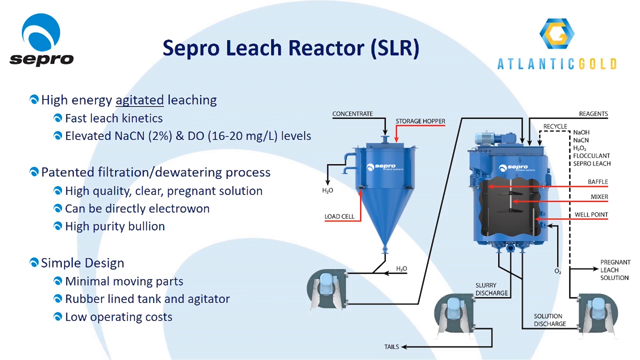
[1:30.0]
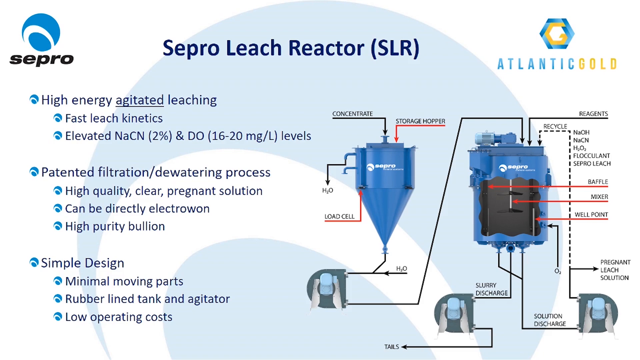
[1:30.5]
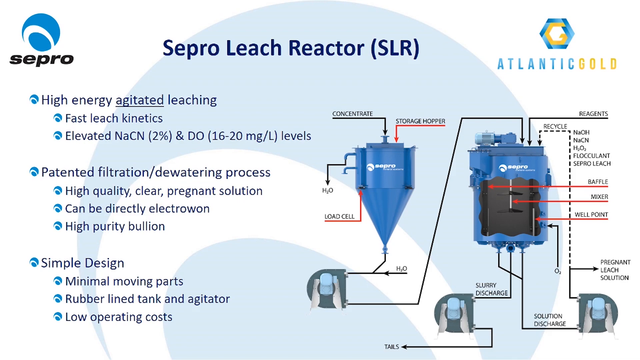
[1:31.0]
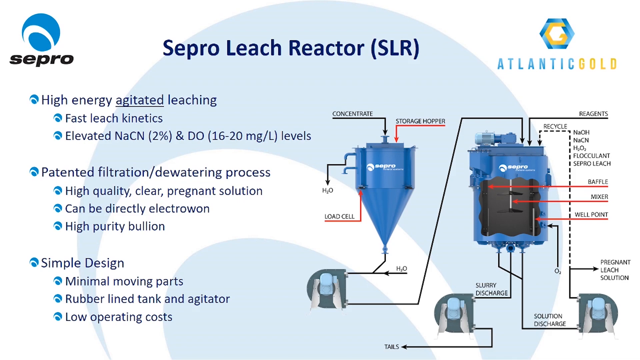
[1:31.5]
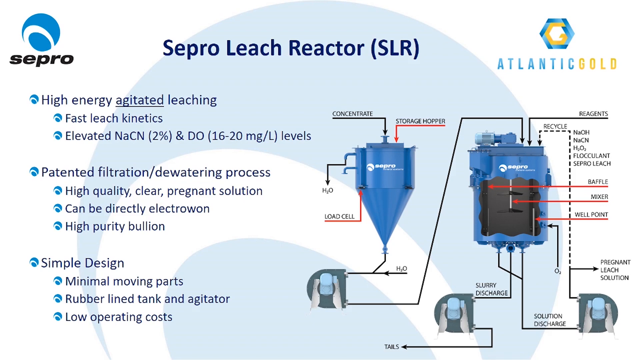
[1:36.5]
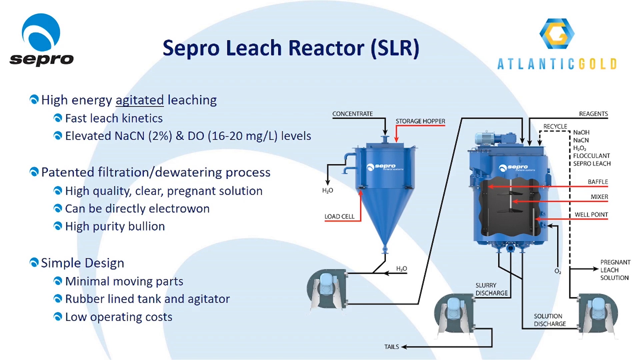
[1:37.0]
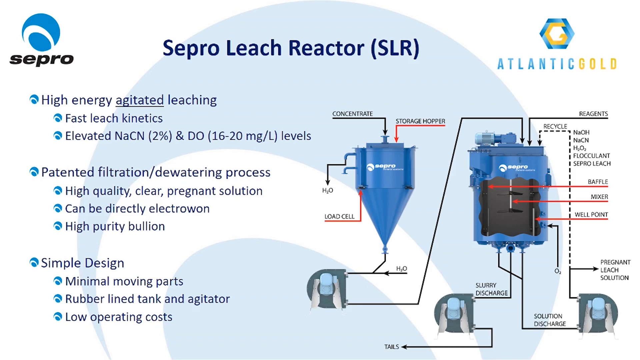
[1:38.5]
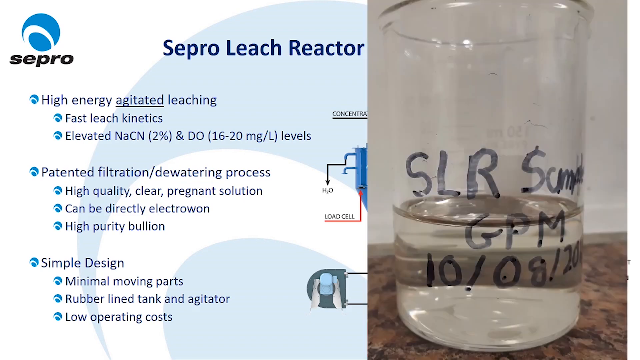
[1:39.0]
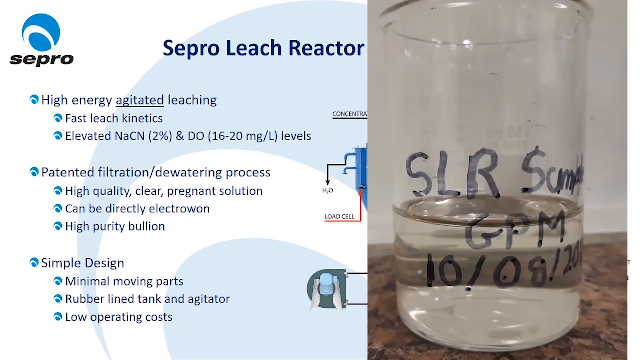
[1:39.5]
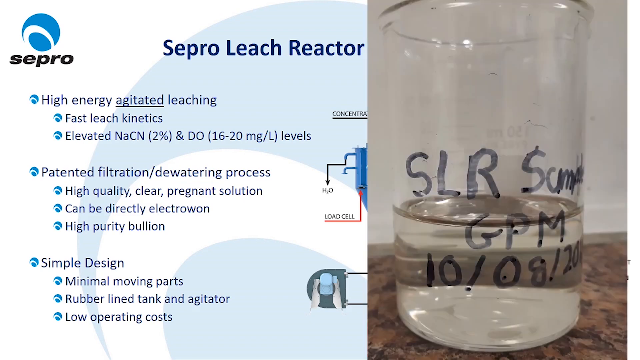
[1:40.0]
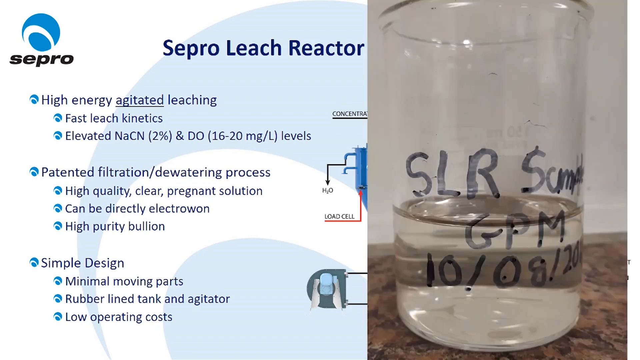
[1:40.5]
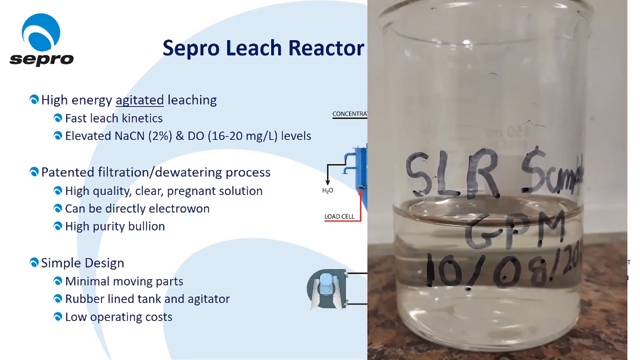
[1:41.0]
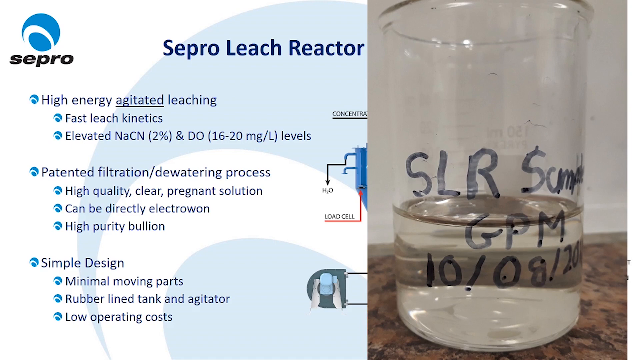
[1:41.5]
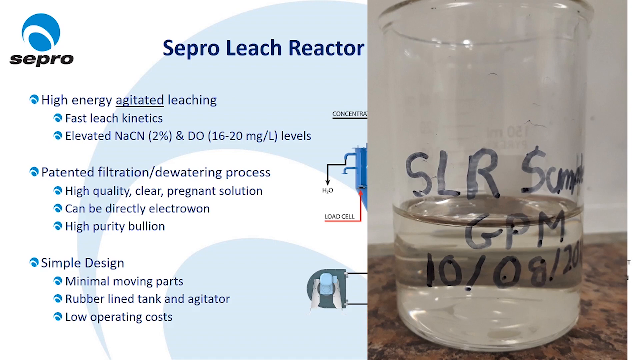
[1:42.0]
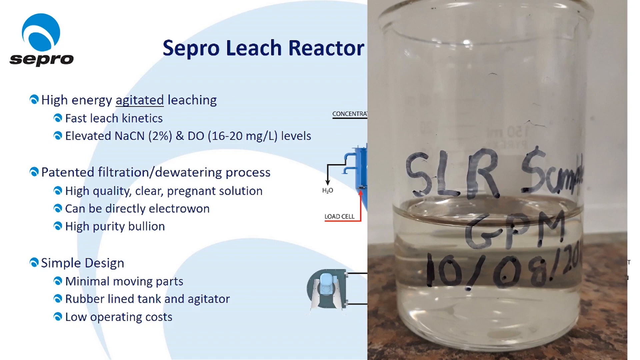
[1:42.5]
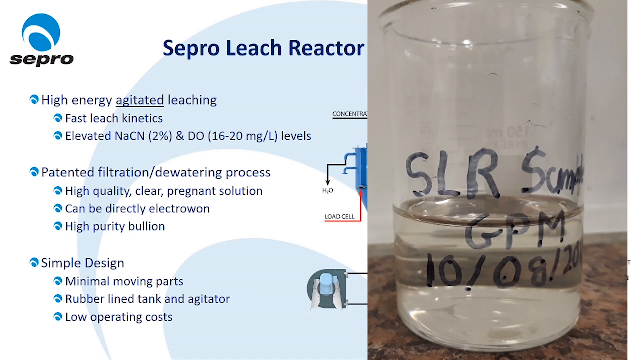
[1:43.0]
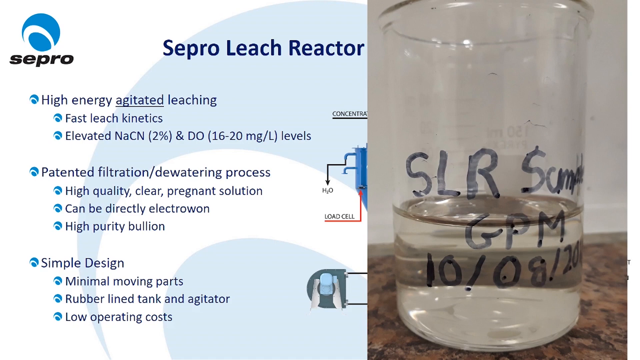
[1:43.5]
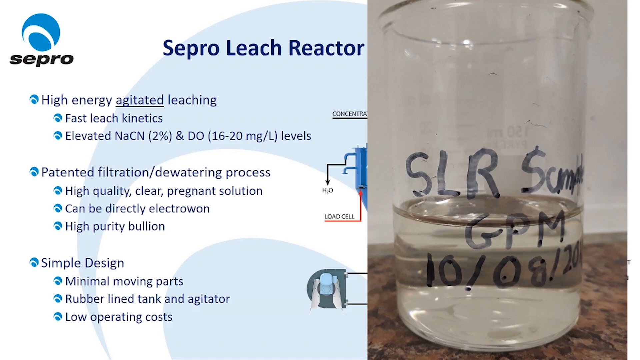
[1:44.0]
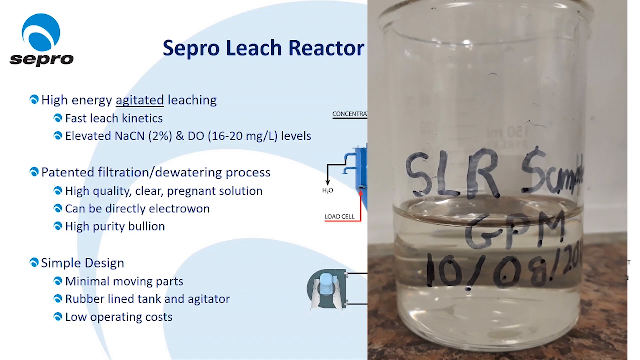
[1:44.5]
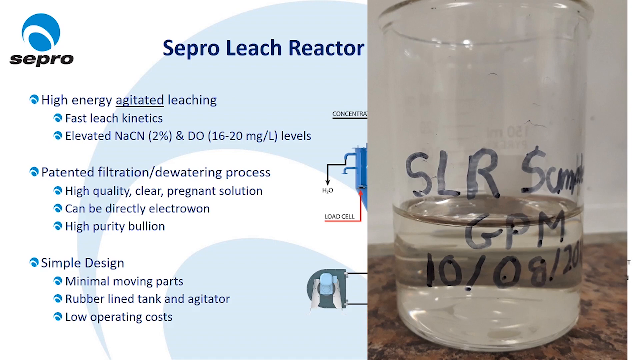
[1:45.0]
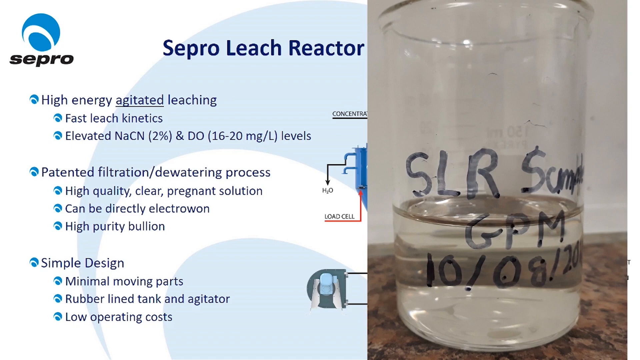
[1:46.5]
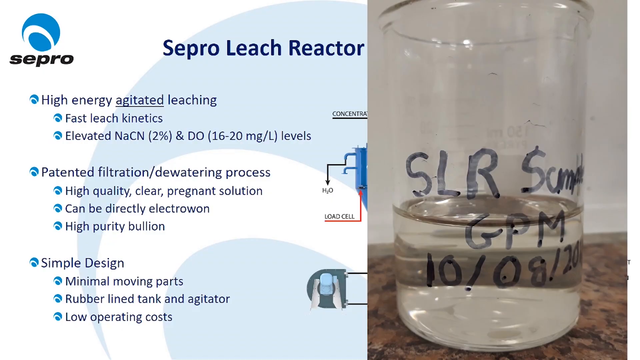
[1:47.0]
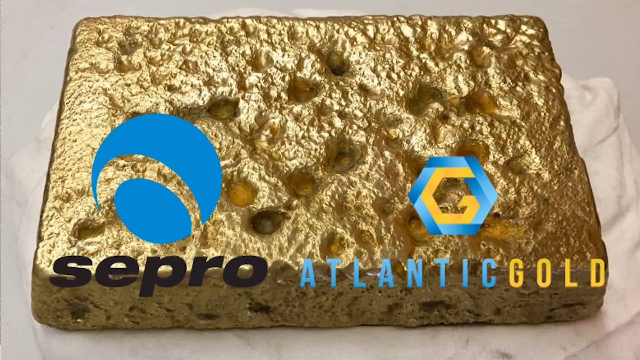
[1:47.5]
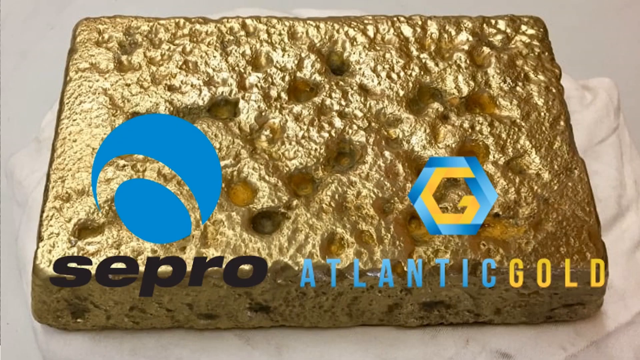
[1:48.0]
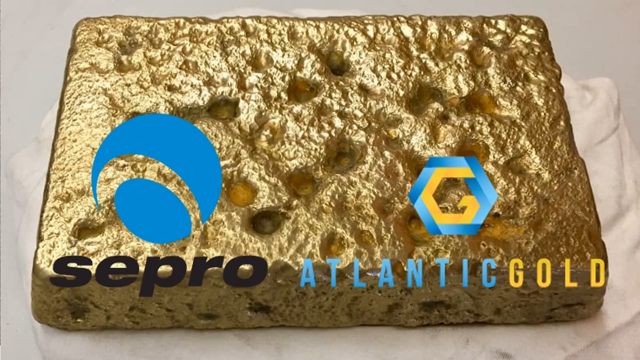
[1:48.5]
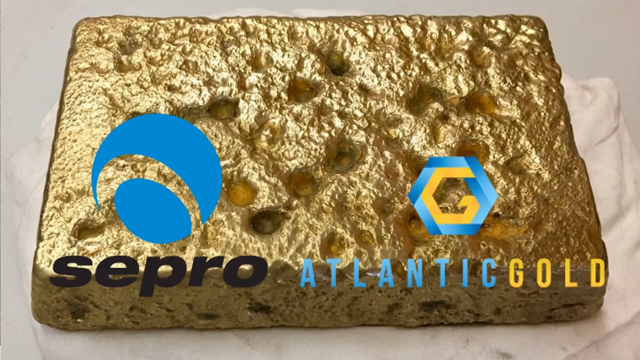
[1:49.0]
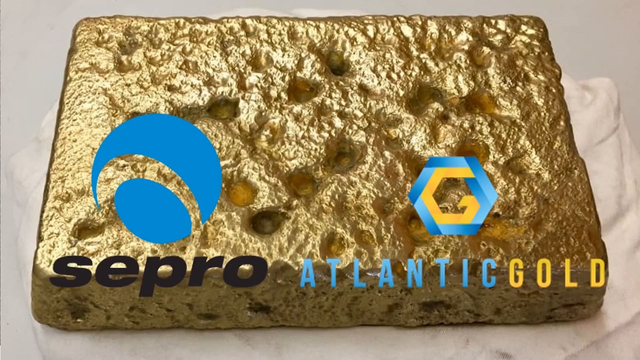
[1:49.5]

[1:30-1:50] An infographic of the Sepro leach reactor shows bulleted items describing what it does: "high-energy agitated leaching, fast leach kinetics elevated in NaCN 2 percent and DO 16-20 mg-L levels. Patented filtration /dewatering process, high-quality clear pregnant solution, can be directly electrowon, high-purity bullion. Simple design, minimal moving parts, rubber line tank and agitator, low operating costs." Then the half of the image where the parts were described is shown. A beaker filled with a solution and a cup are on a table, with "SLR" and "SCM, GPM, 10 / 08/ 20" written in a Sharpie-like marker. Next come logos for Sepro and Atlantic Gold, and a large bar of gold with some divots in it takes up the entire screen.